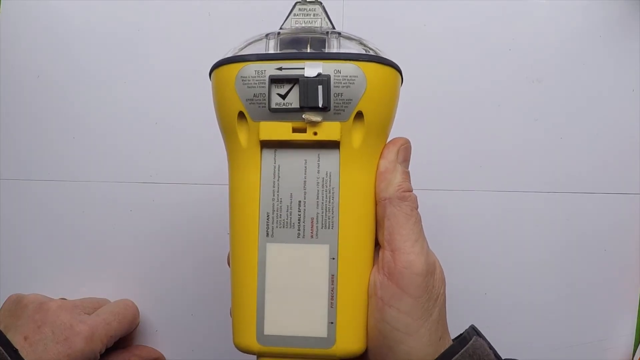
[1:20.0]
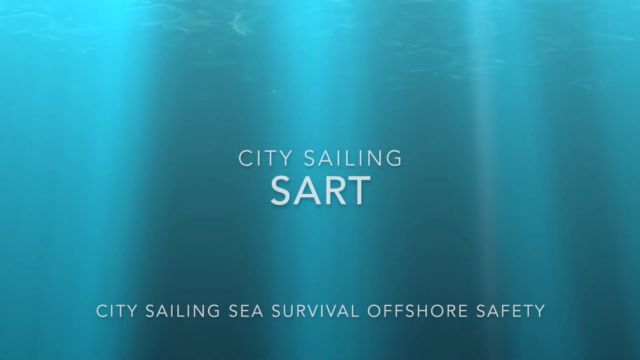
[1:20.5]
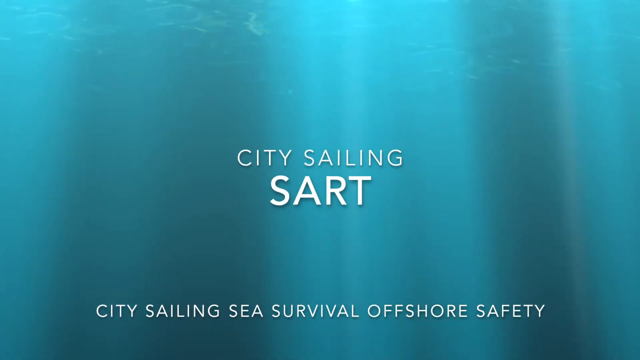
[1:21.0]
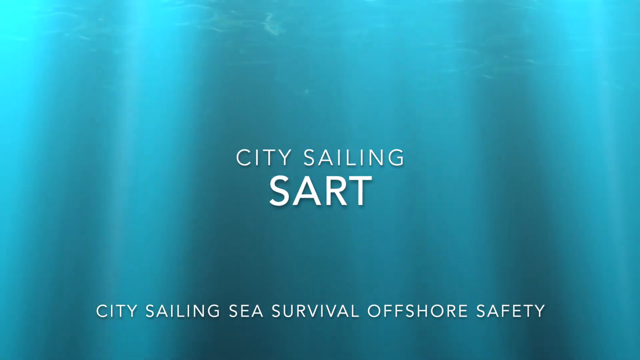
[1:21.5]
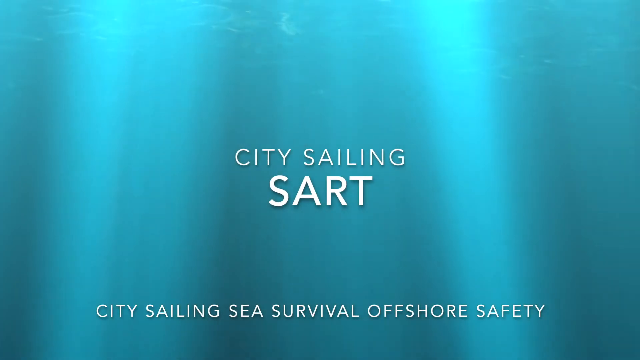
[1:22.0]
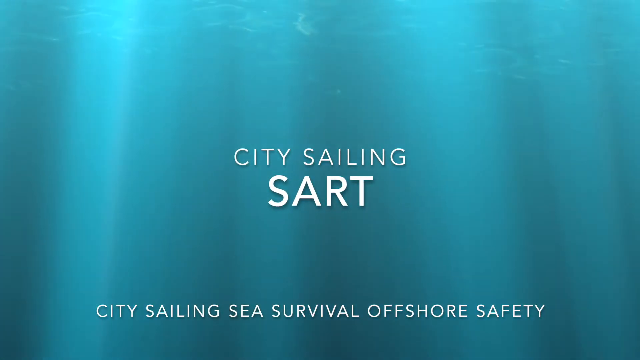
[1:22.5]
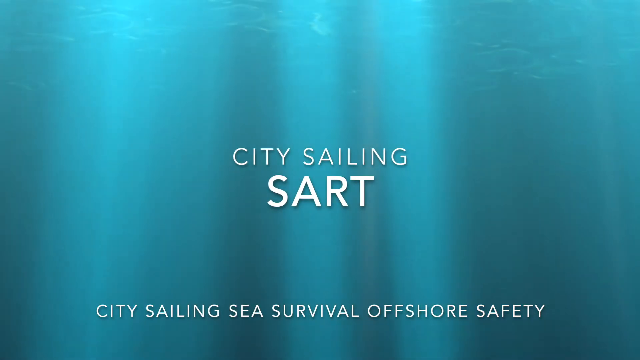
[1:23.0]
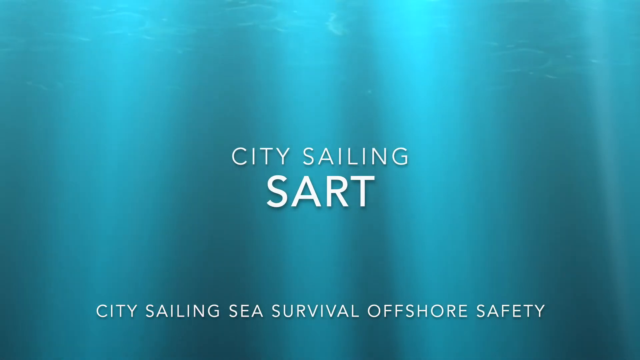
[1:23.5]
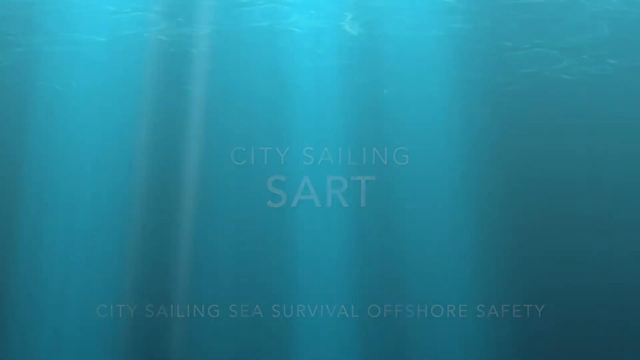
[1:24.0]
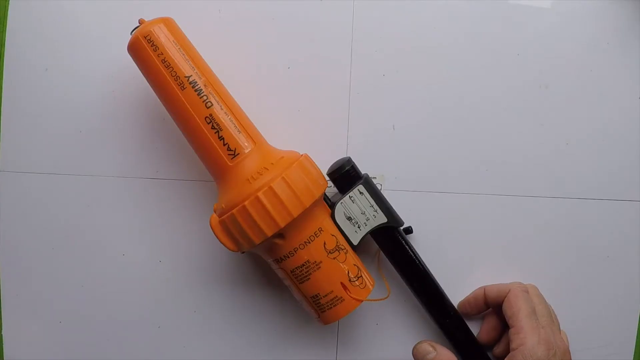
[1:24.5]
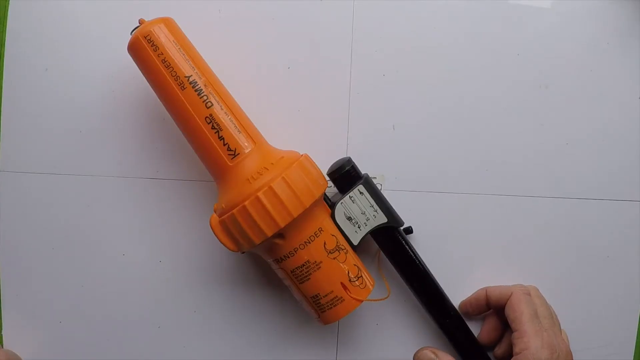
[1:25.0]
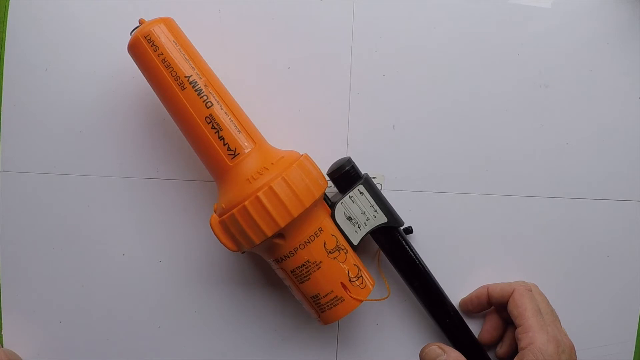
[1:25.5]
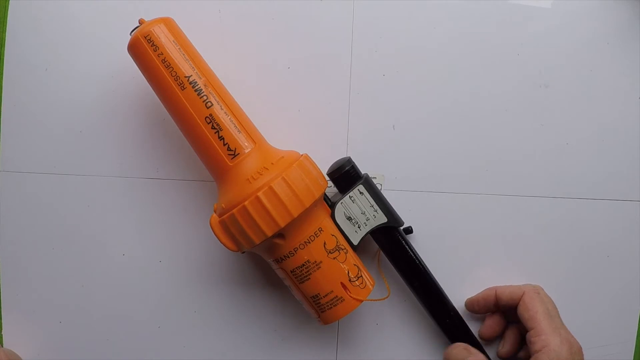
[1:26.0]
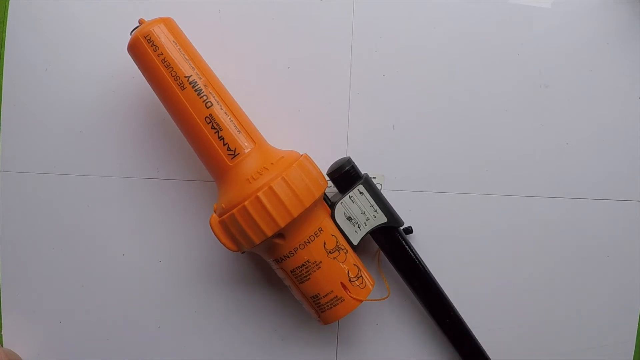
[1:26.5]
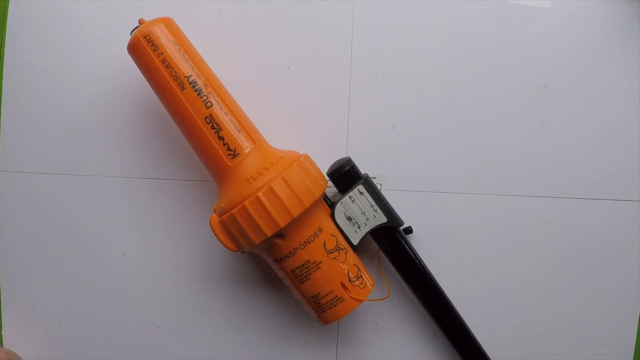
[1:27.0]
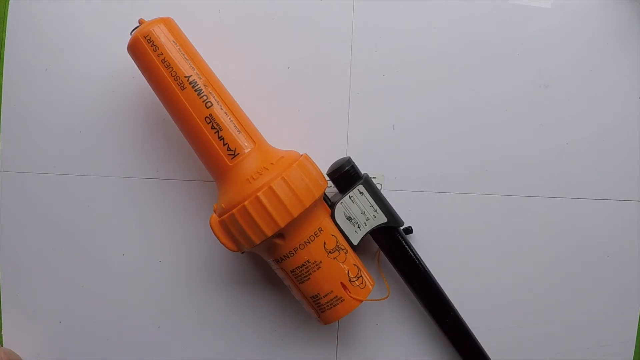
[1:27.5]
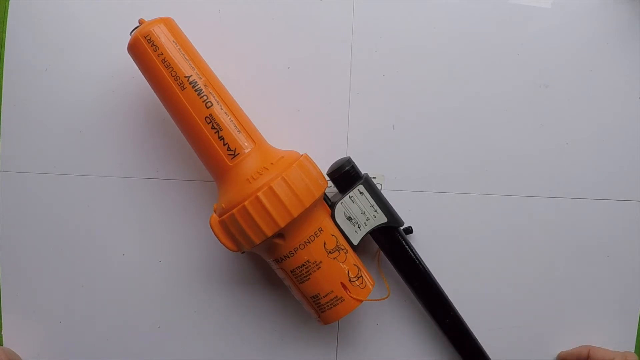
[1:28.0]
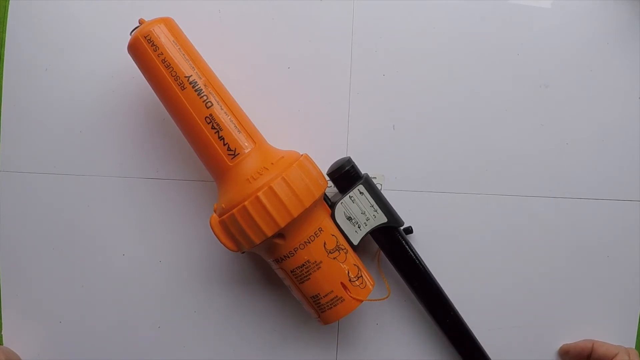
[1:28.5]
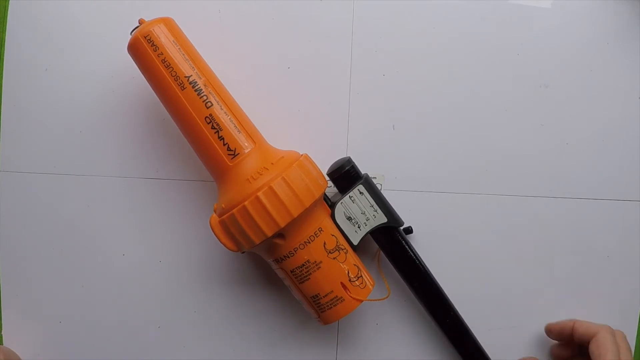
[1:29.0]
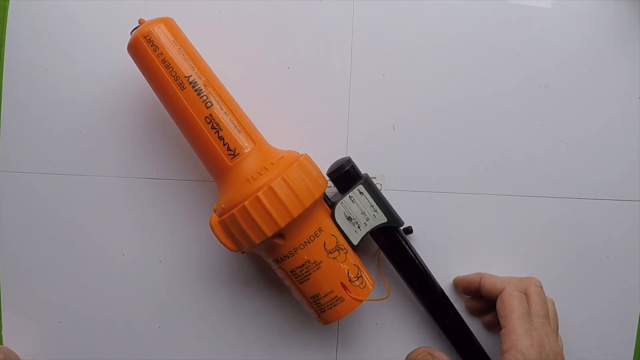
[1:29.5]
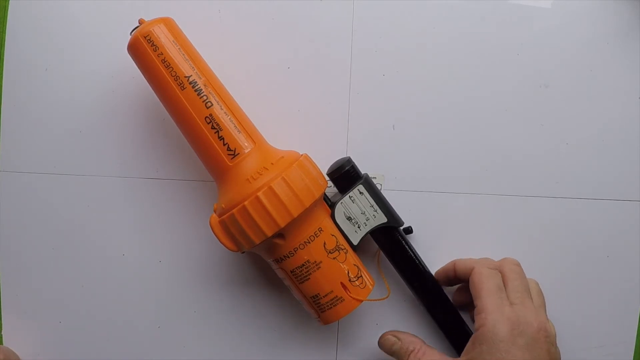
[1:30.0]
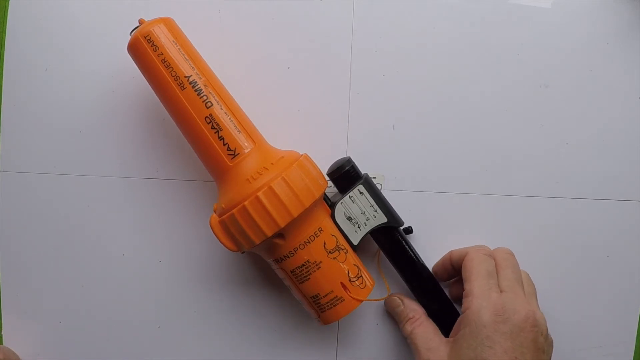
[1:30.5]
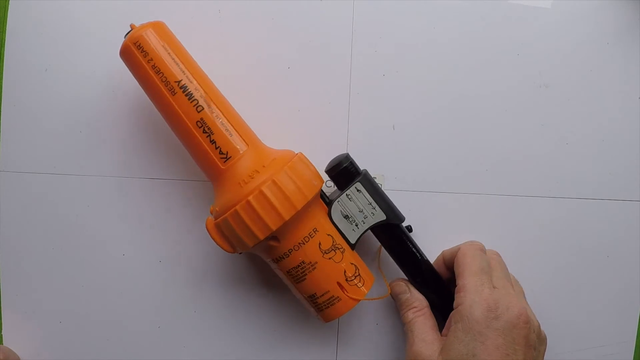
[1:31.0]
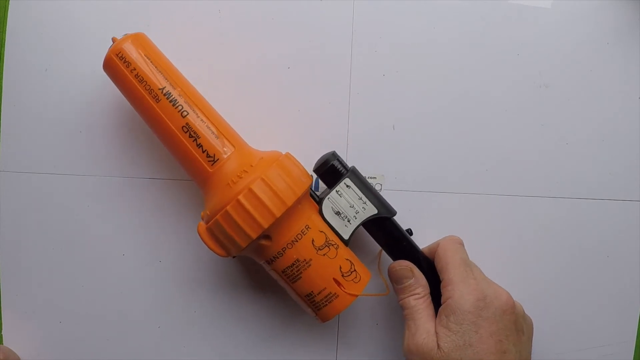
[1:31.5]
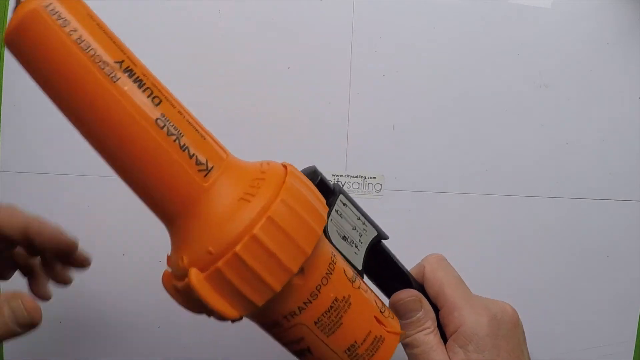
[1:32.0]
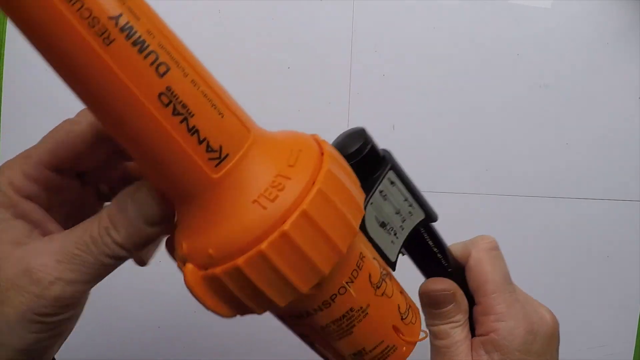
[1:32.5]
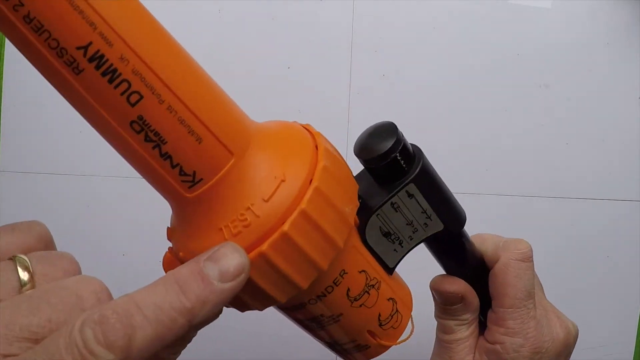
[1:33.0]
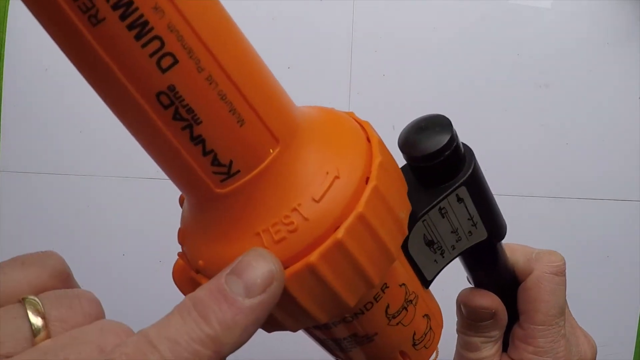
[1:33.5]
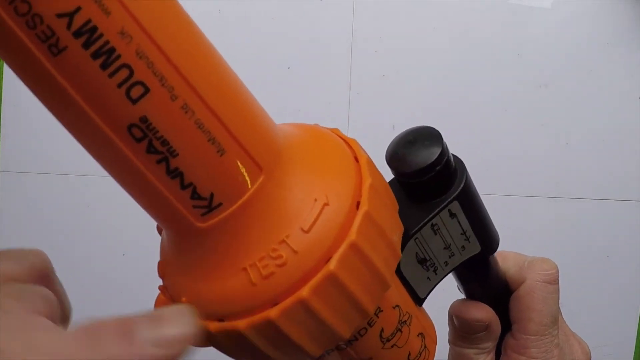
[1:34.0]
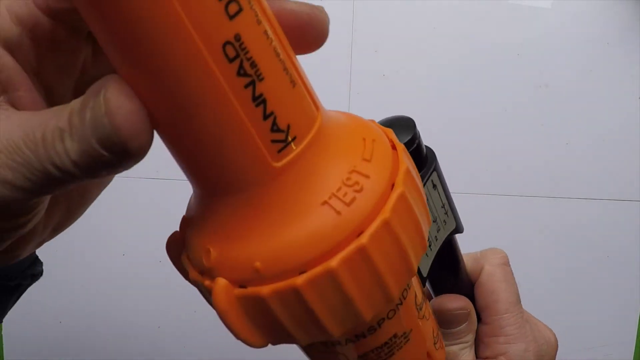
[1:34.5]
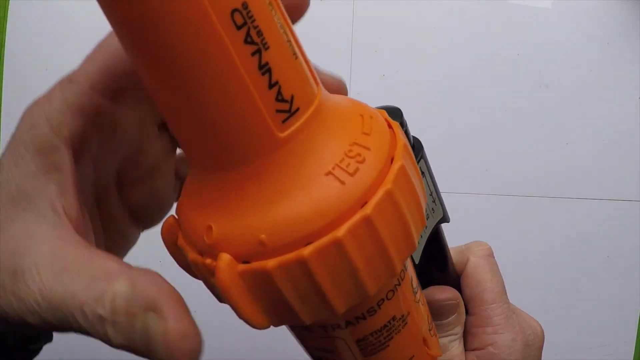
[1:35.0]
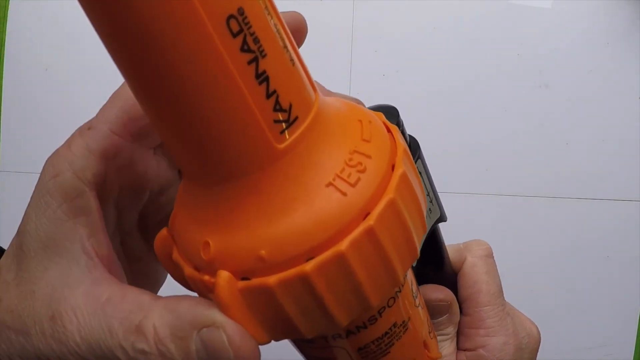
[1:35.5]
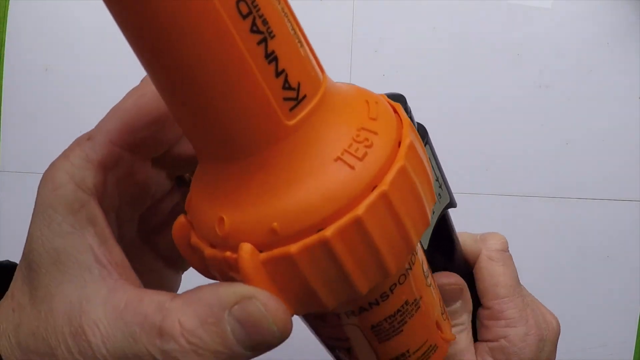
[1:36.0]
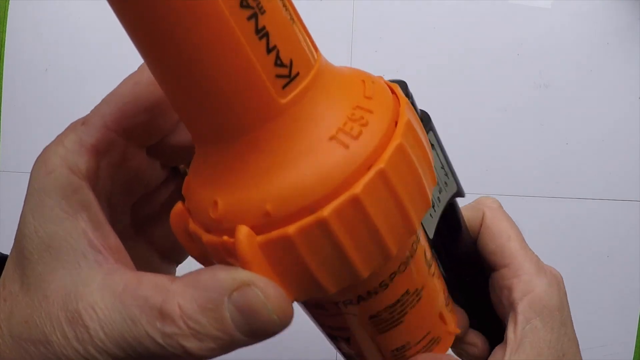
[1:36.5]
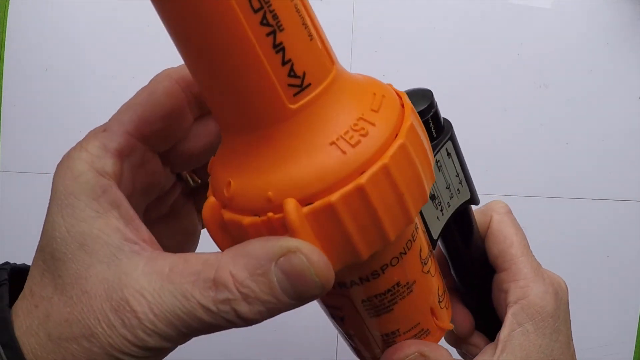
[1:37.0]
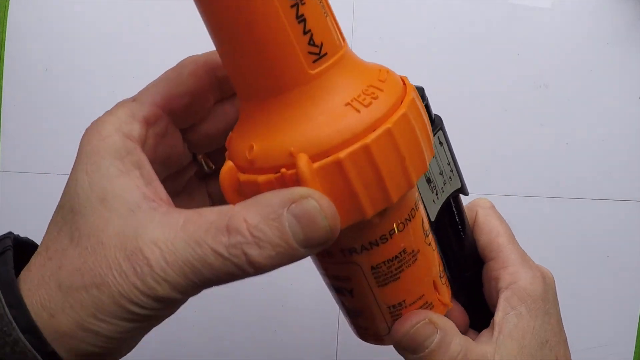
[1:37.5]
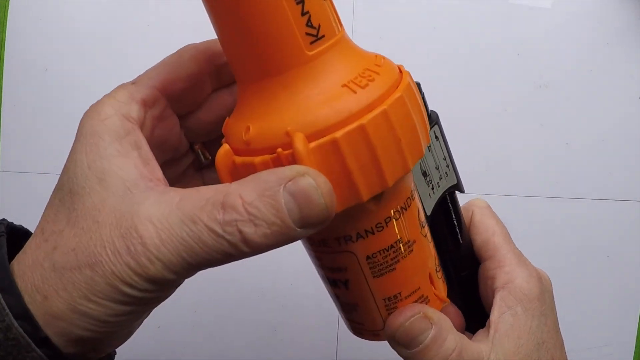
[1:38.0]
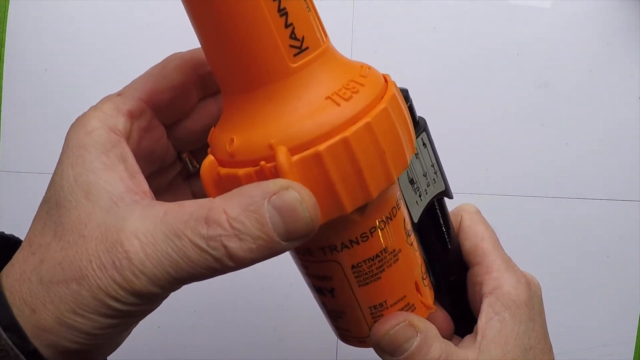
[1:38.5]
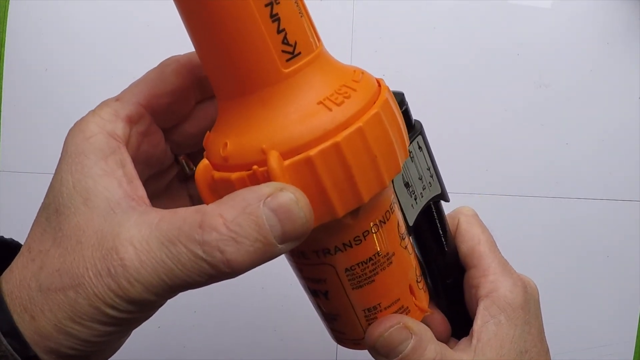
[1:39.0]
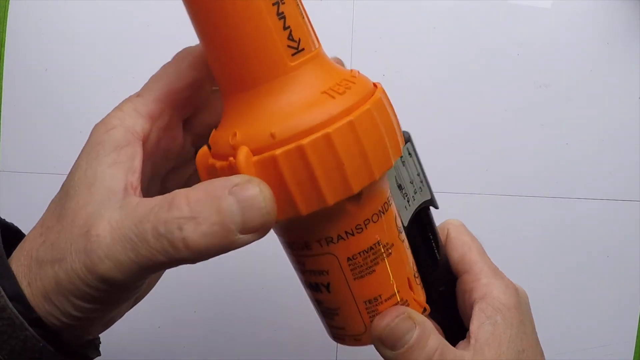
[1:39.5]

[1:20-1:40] The video returns to the screen that appears to be under the ocean, in dark blue and light blue, with vertical sun rays coming through the ocean down to the floor. The screen shows "city sailing, sea survival, offshore safety". The orange contraption, which seems to do some kind of regulation, is shown with a black piece attached to it. The individual moves their hand and picks up the object against the white background, showing the knob to turn to begin and perform the test. The video then switches back to the original screen.